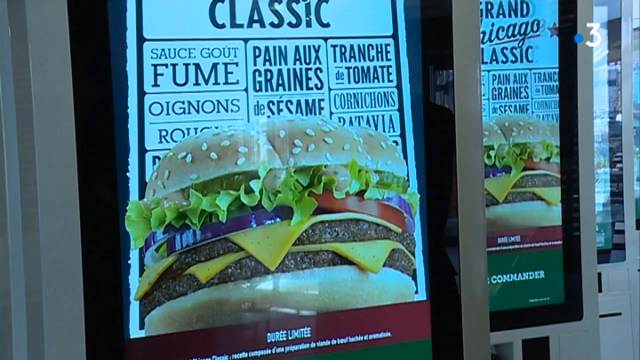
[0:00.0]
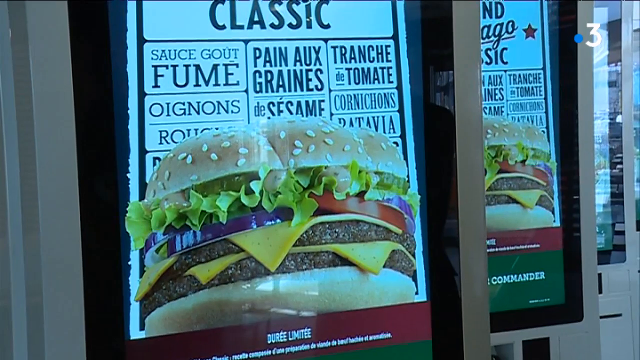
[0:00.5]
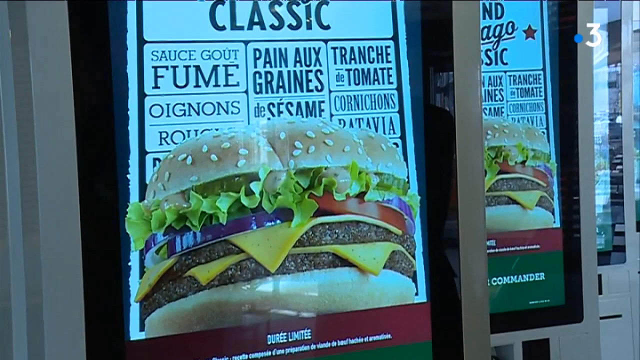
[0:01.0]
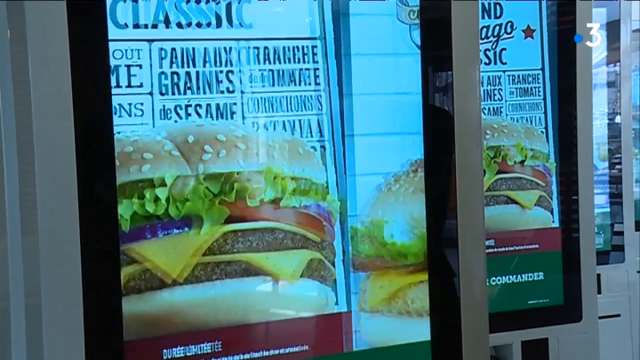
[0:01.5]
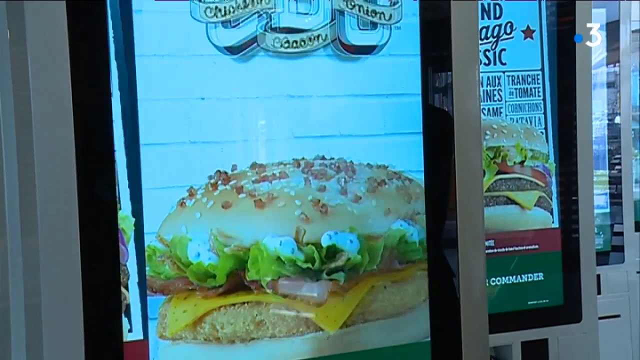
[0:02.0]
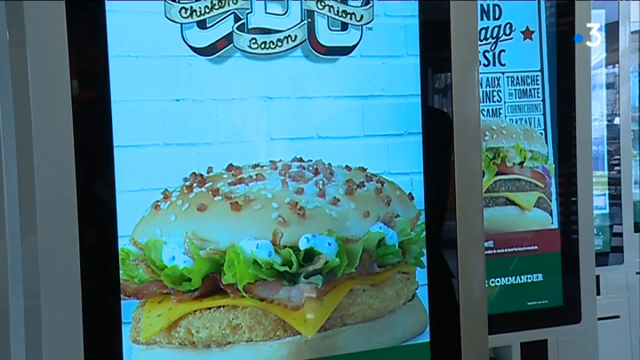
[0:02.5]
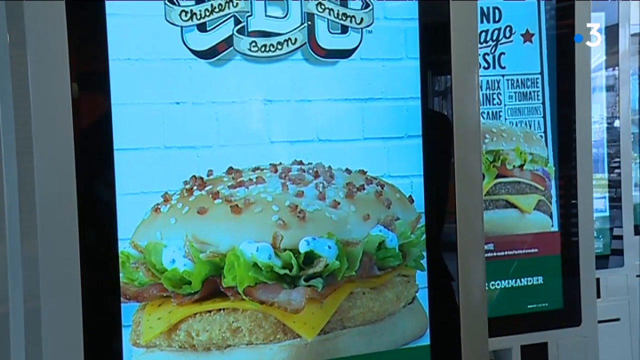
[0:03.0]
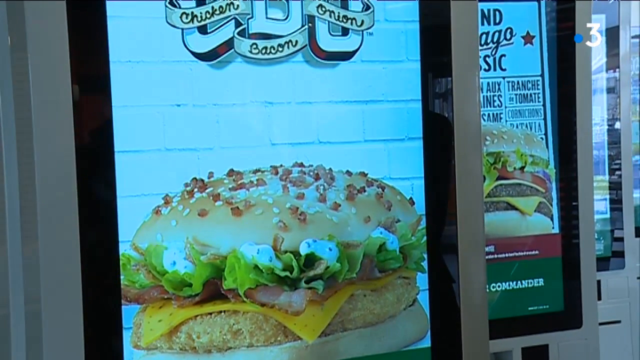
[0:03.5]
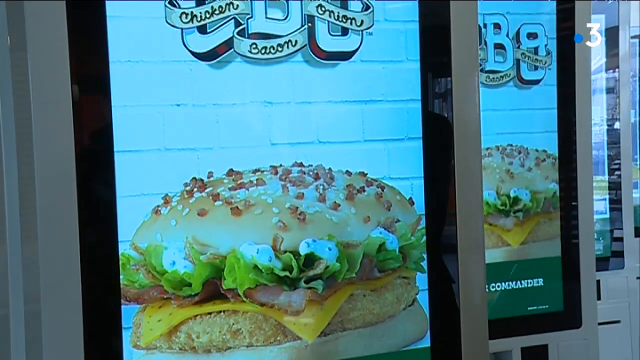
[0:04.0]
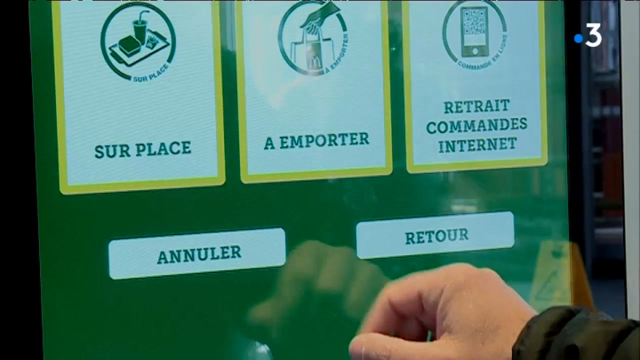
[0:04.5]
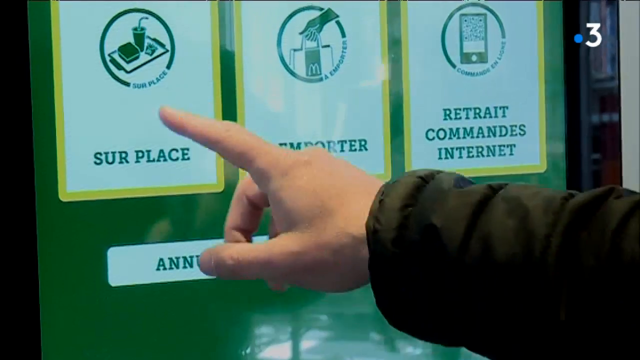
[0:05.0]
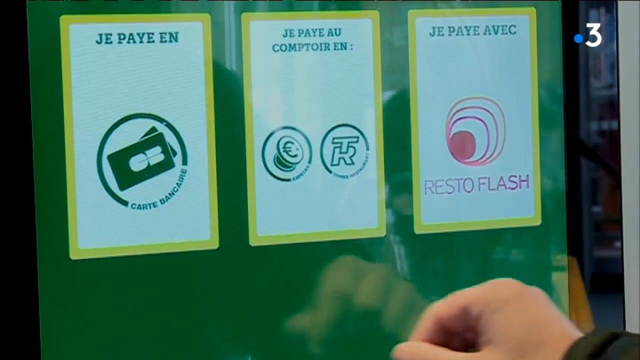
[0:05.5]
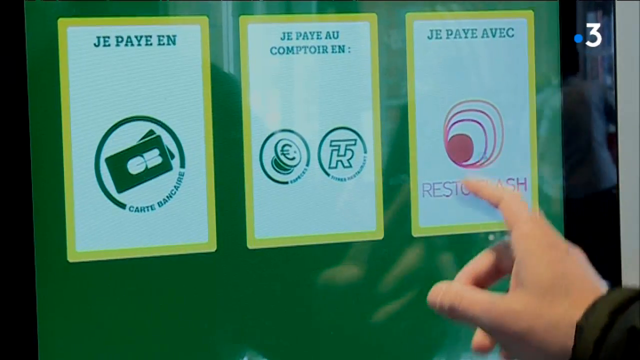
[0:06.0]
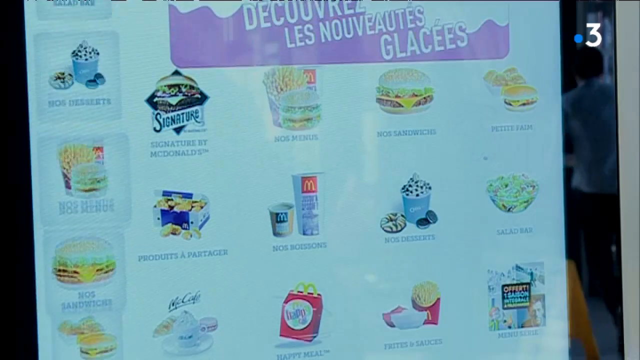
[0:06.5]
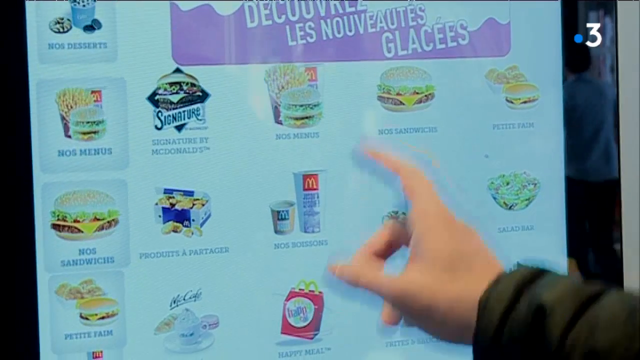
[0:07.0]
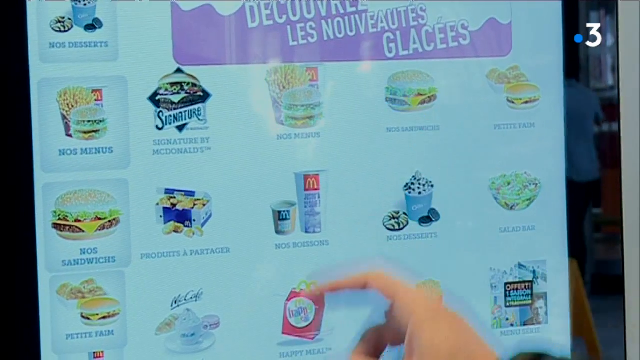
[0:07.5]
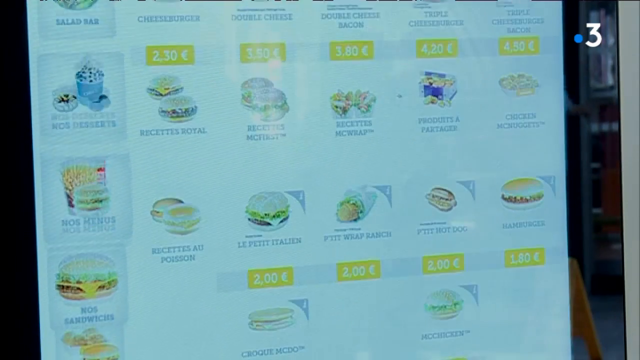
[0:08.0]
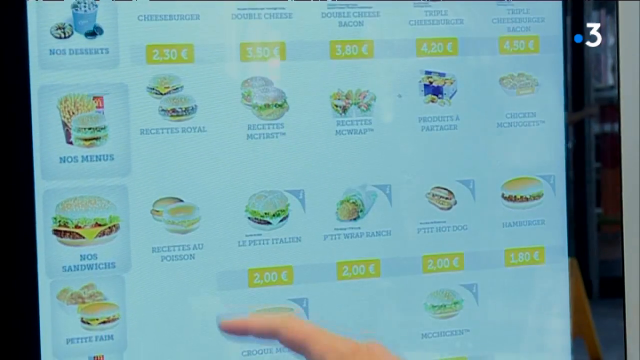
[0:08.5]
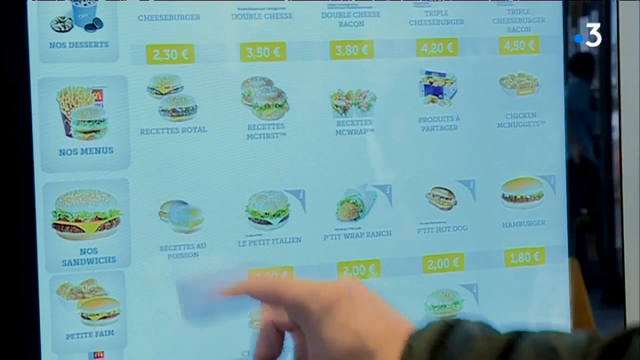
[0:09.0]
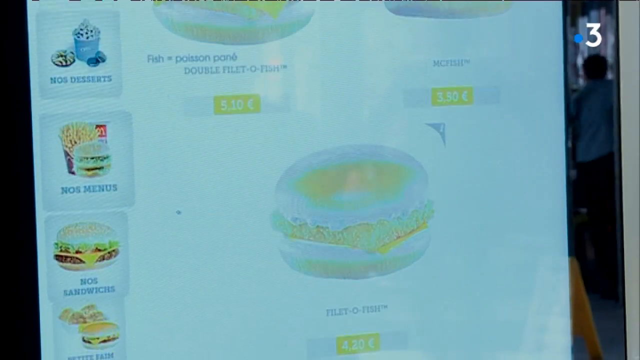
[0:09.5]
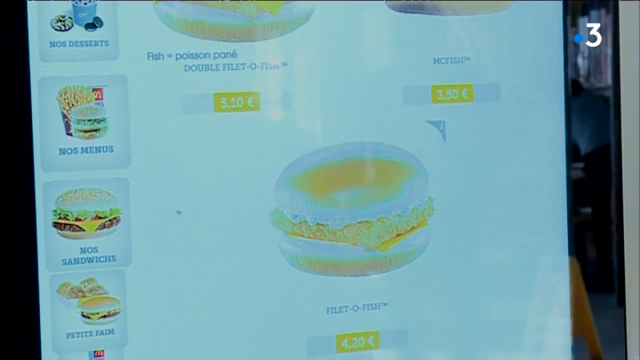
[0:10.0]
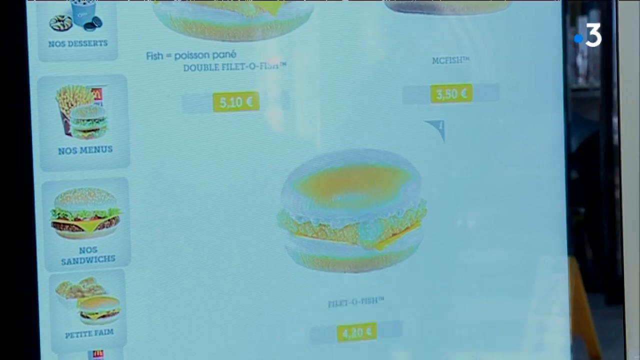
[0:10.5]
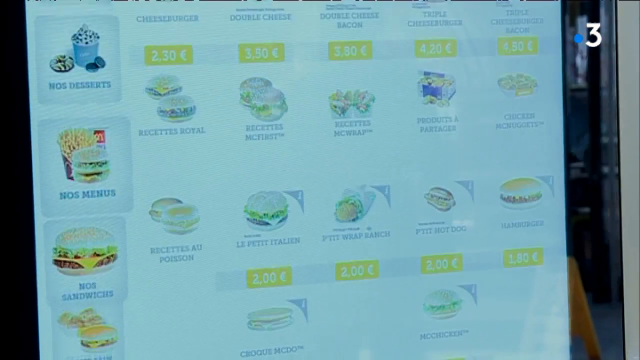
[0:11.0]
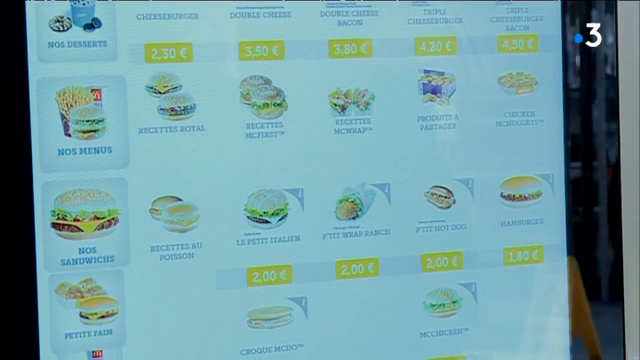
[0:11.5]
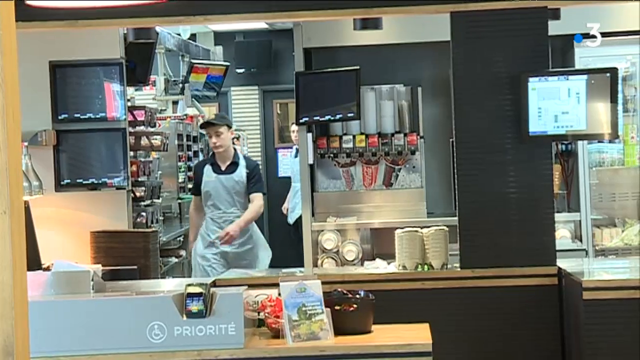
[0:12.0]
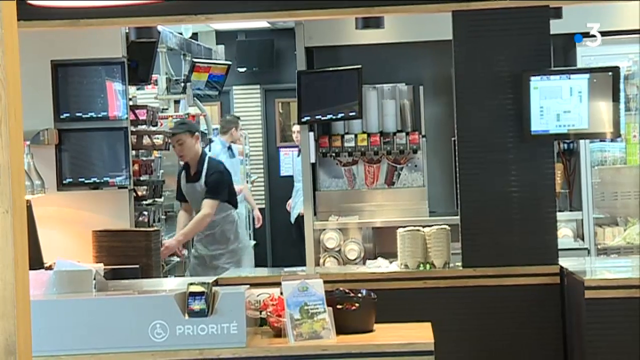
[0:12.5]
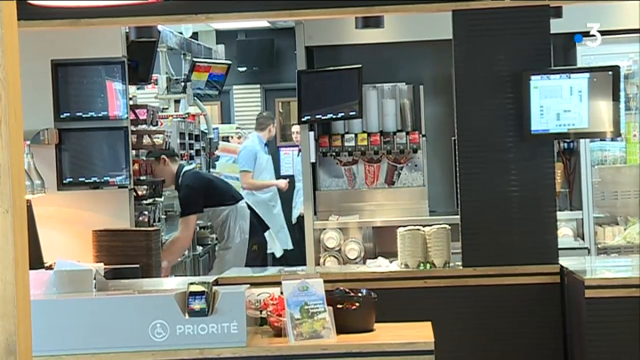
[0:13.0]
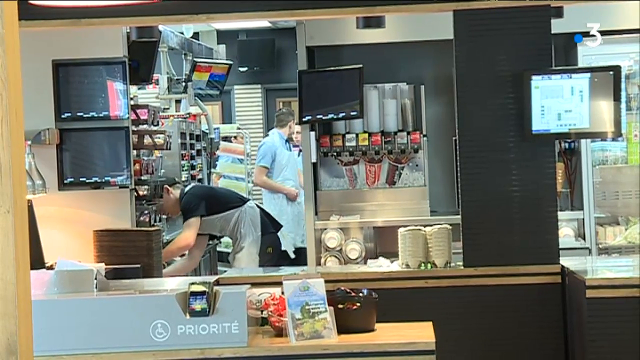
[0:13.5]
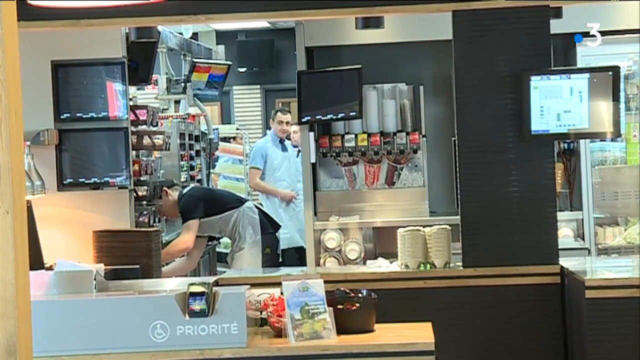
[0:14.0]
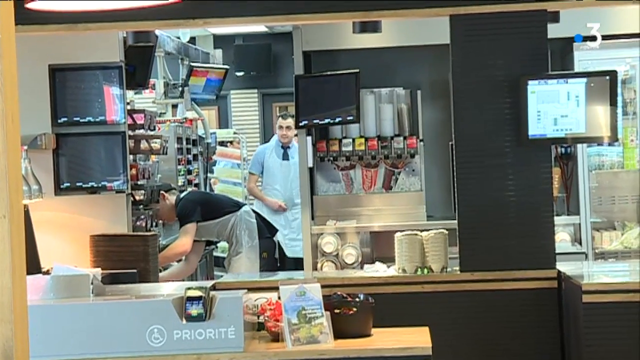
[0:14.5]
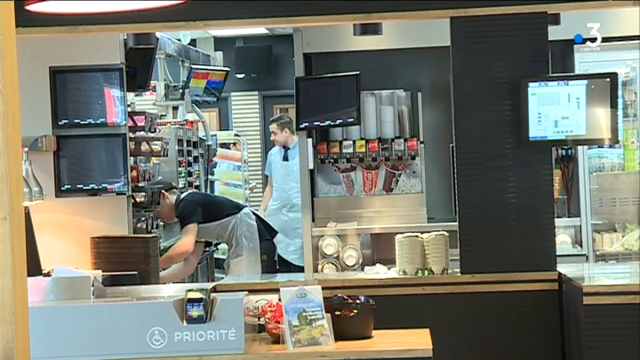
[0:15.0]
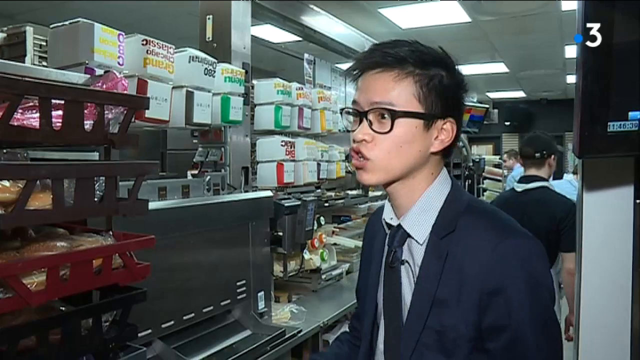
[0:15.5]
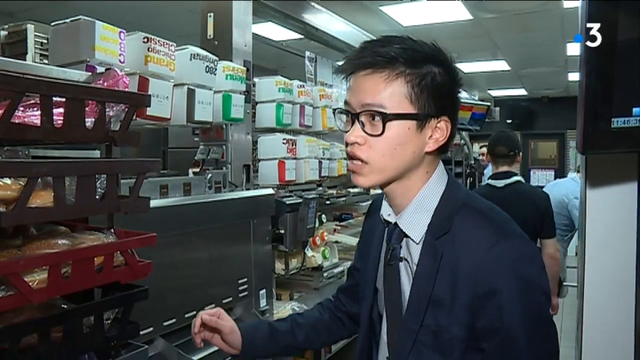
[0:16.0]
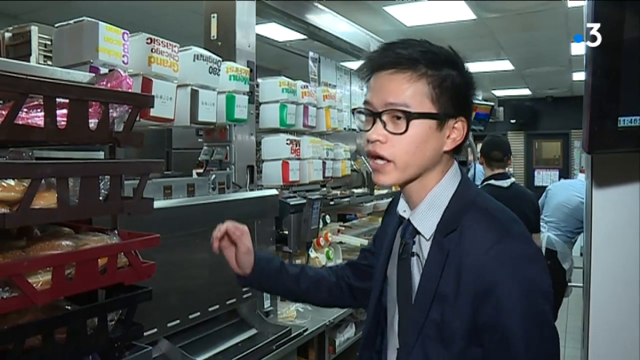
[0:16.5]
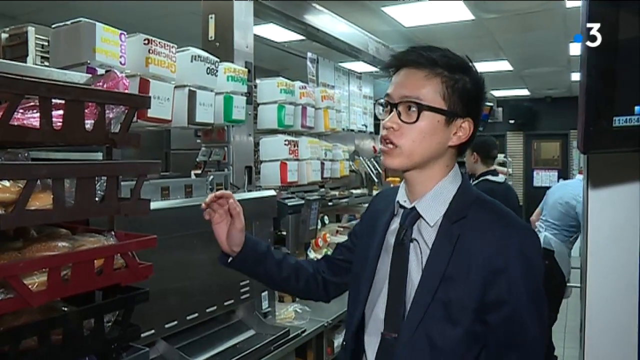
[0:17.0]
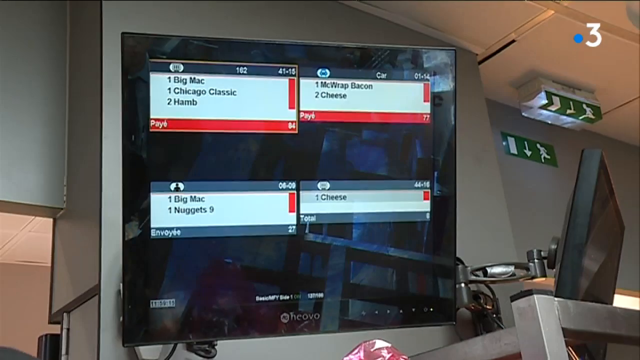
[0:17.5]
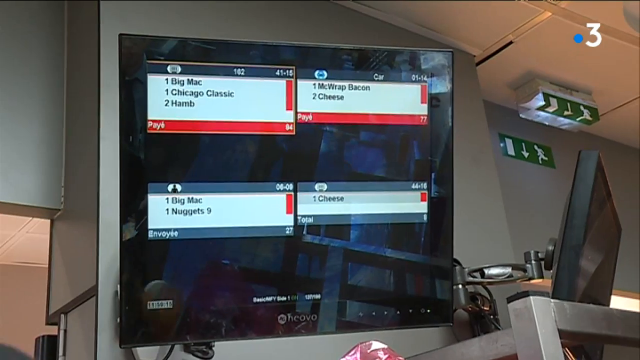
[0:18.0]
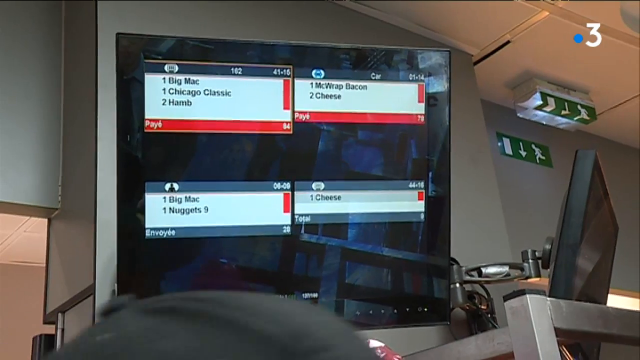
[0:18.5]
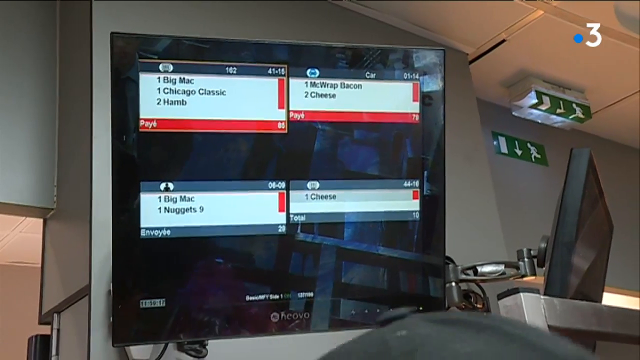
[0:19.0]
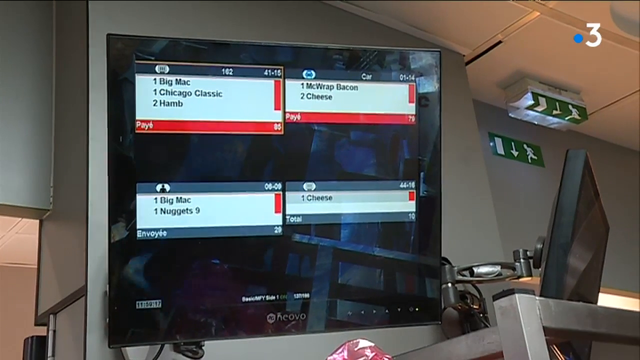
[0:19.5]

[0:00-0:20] The video opens on a close-up of what looks like a self-service kiosk for ordering food, with the food information written in French. The screen shows a picture of a hamburger with two patties and cheese; the items listed above it say "classic" followed by French descriptions of the sandwich's ingredients, including onions, a slice of tomato and sesame seeds on the bun. The image on the digital screen then shifts to the left and changes to another burger or sandwich with a sesame seed bun, with "chicken, bacon and onion" written at the top. Next comes a screen that says in French how to place an order. In one scene there is a McDonald's logo on a bag. Someone's hand presses different images on the screen to choose what to order: dessert choices, sandwich choices, french fries, a wrap with ranch and a small hot dog, with the images moving on the screen. The video then switches to a kitchen, presumably at a McDonald's, where people in white aprons walk through. Various kitchen scenes follow, with close-ups of some of the food and some of the equipment.